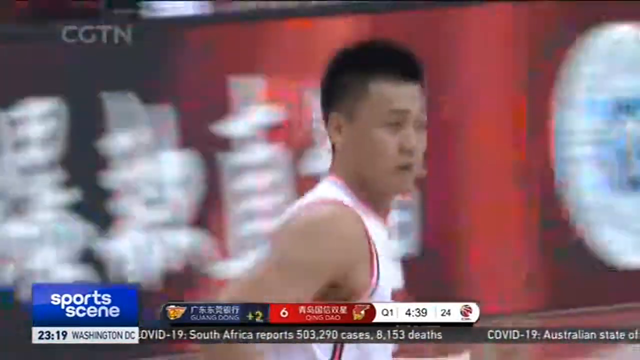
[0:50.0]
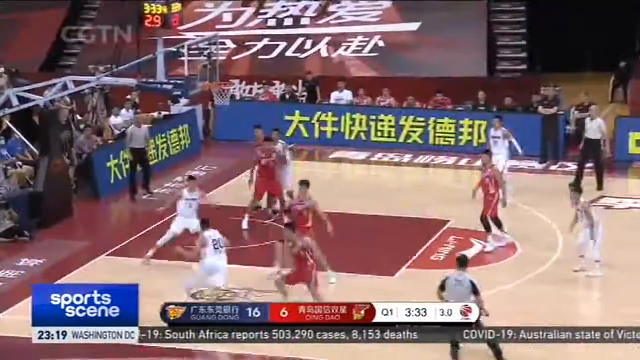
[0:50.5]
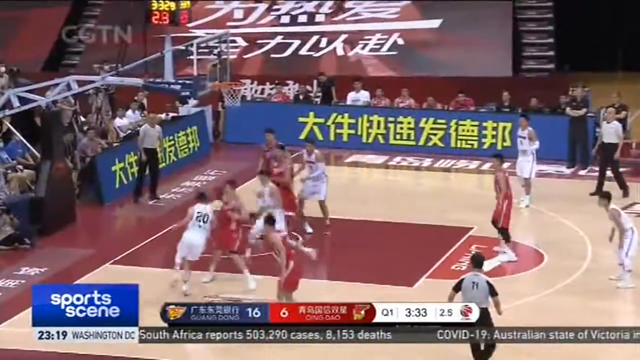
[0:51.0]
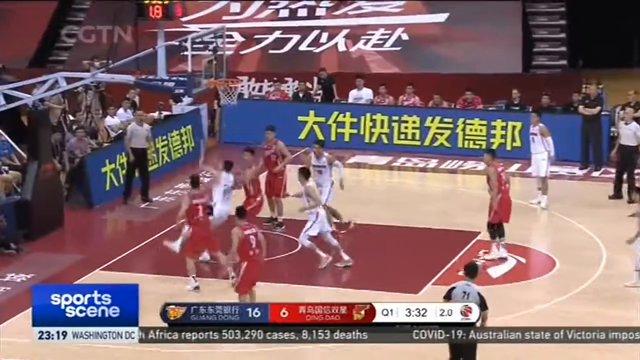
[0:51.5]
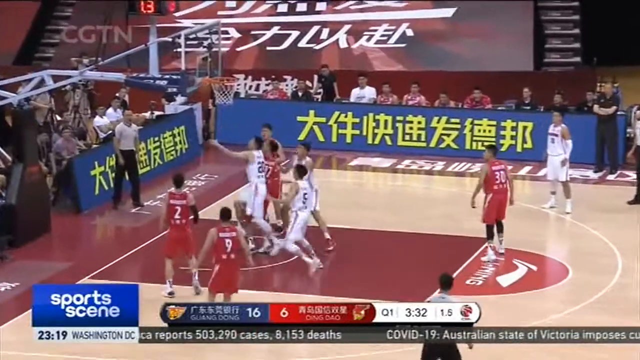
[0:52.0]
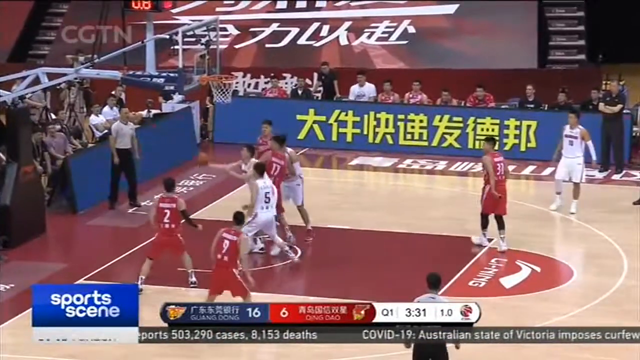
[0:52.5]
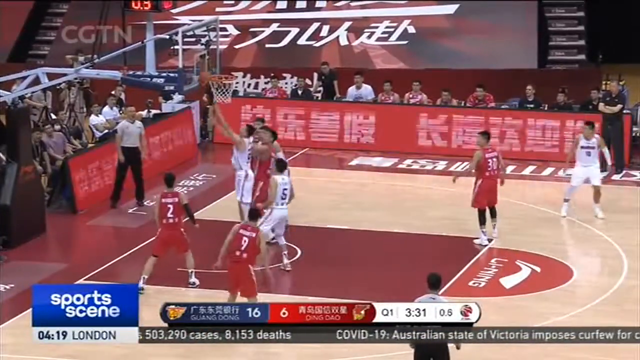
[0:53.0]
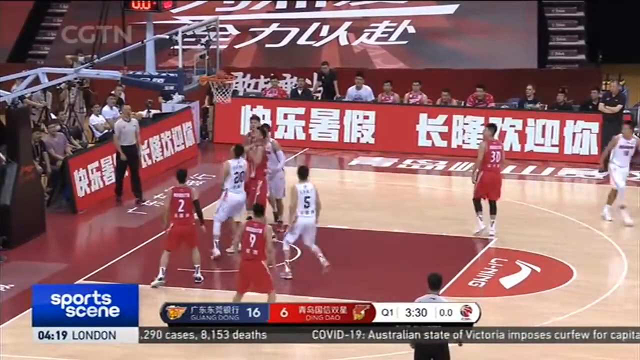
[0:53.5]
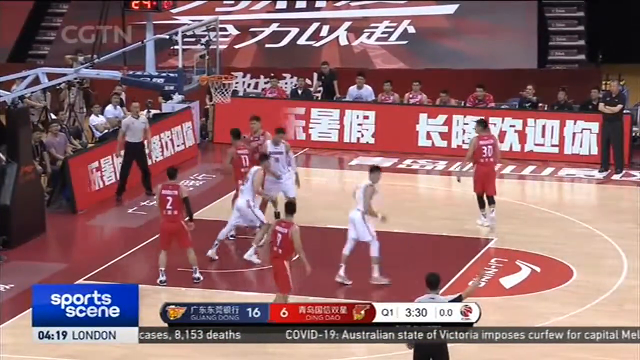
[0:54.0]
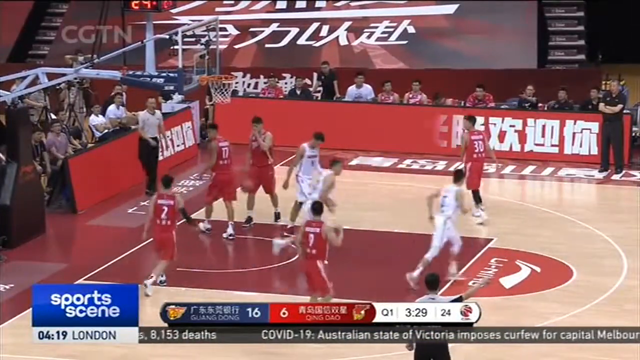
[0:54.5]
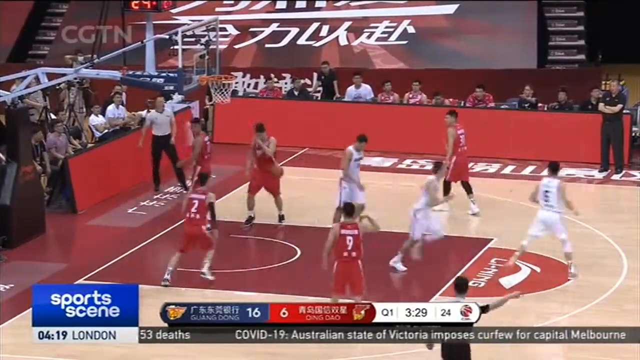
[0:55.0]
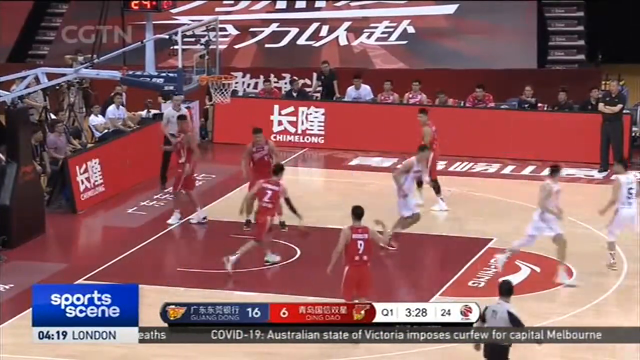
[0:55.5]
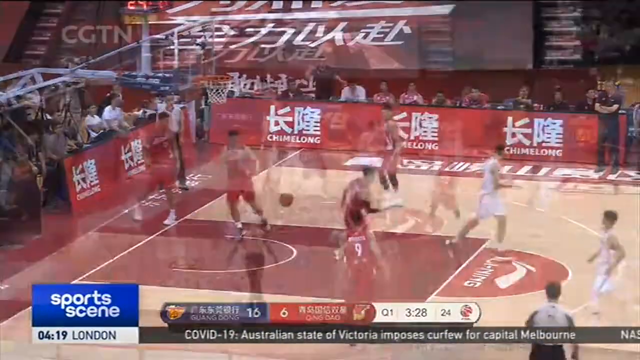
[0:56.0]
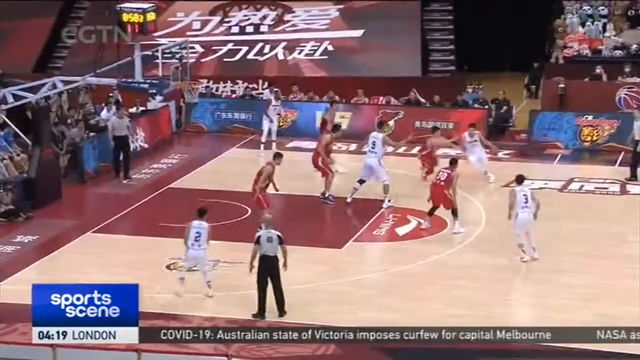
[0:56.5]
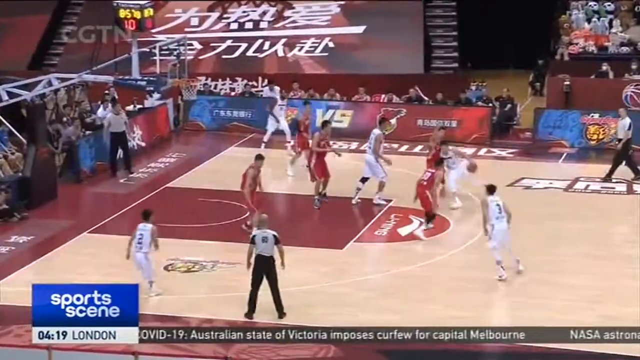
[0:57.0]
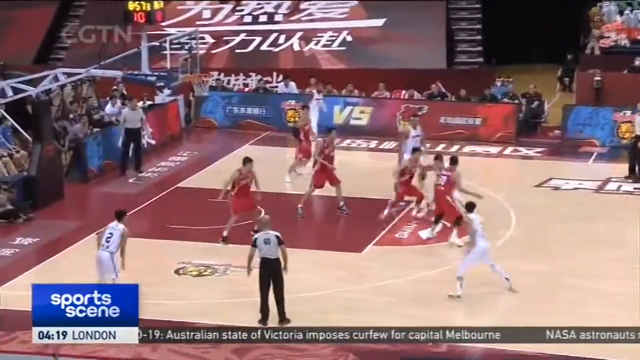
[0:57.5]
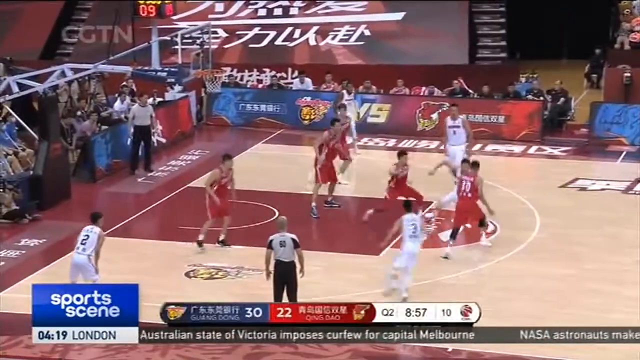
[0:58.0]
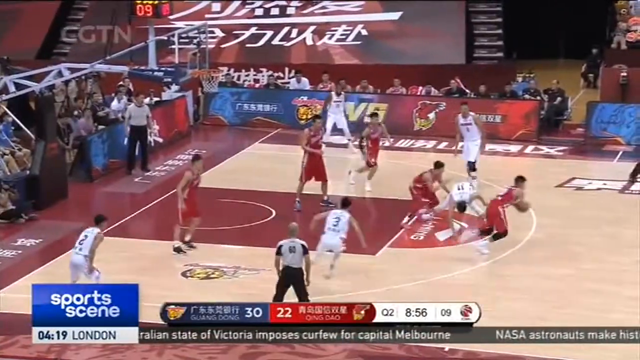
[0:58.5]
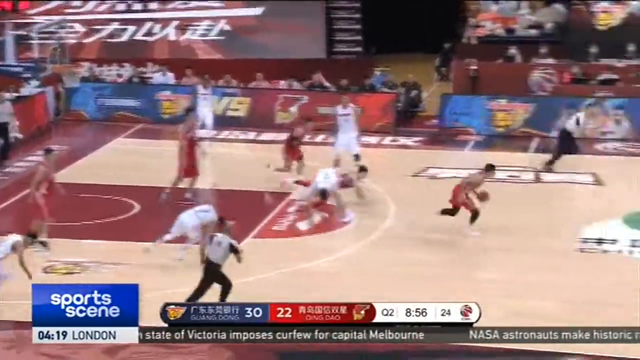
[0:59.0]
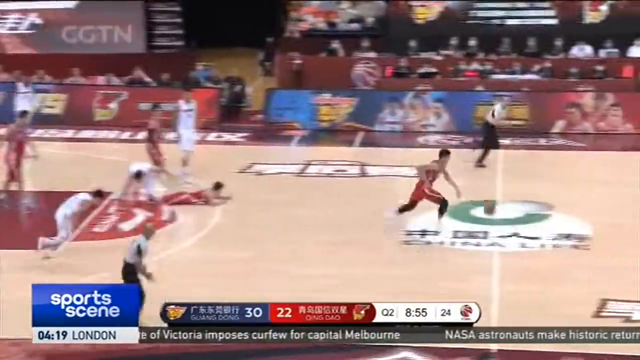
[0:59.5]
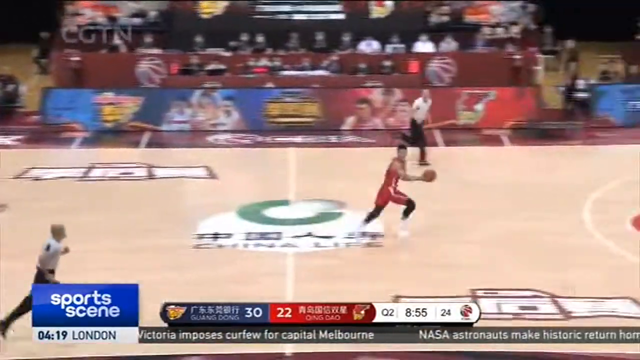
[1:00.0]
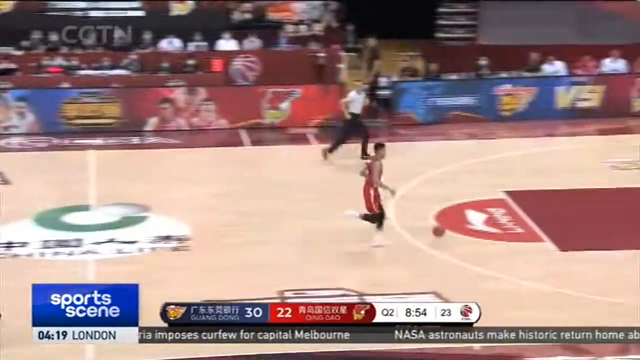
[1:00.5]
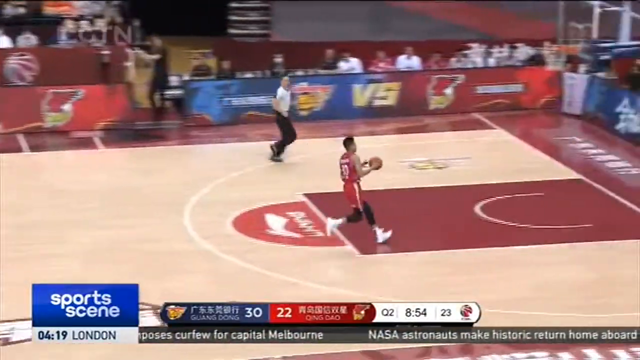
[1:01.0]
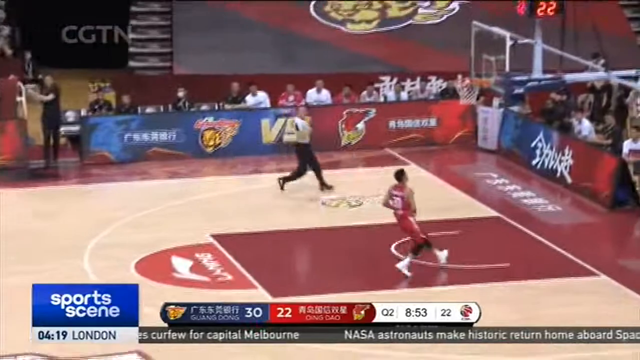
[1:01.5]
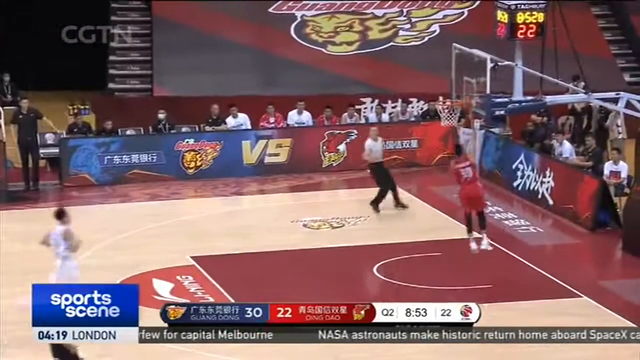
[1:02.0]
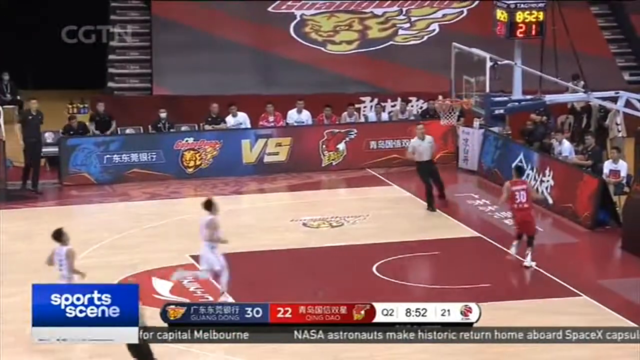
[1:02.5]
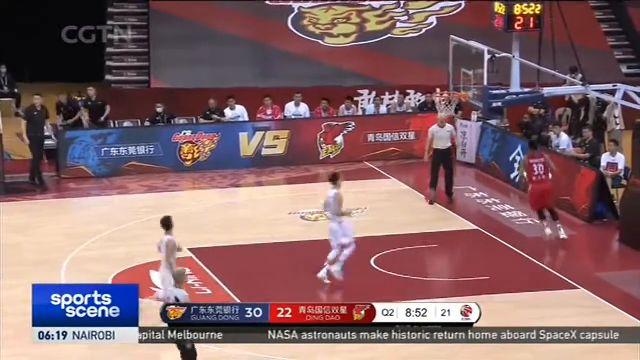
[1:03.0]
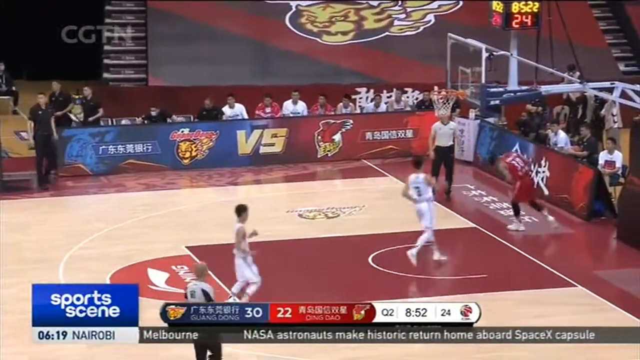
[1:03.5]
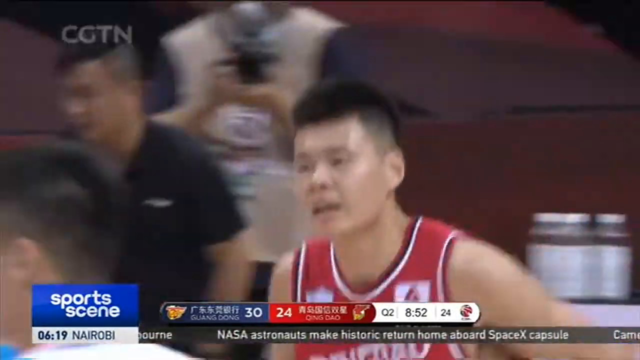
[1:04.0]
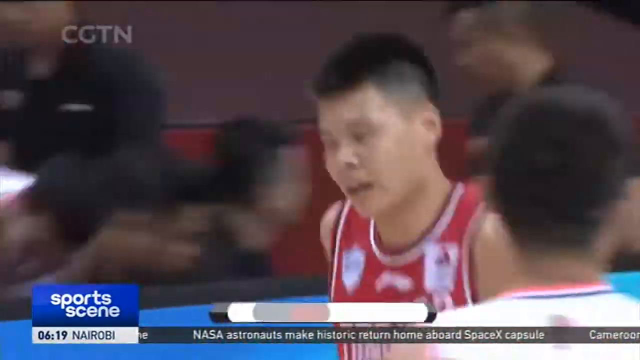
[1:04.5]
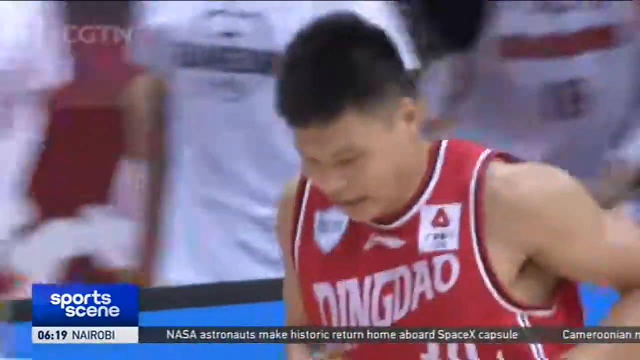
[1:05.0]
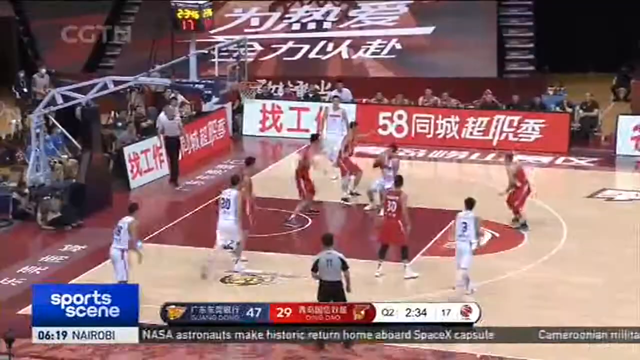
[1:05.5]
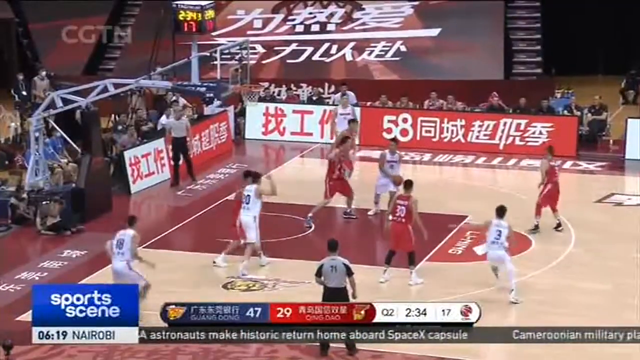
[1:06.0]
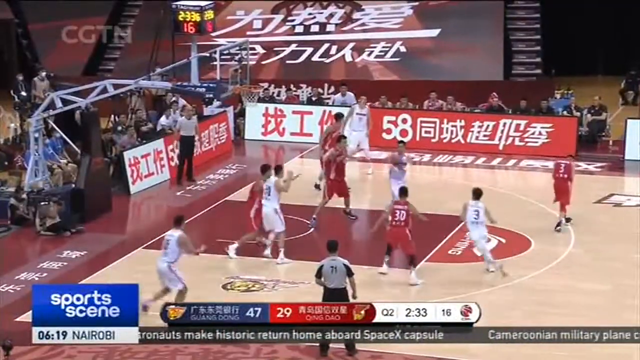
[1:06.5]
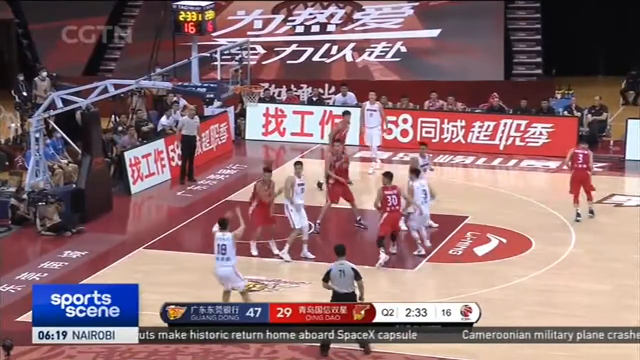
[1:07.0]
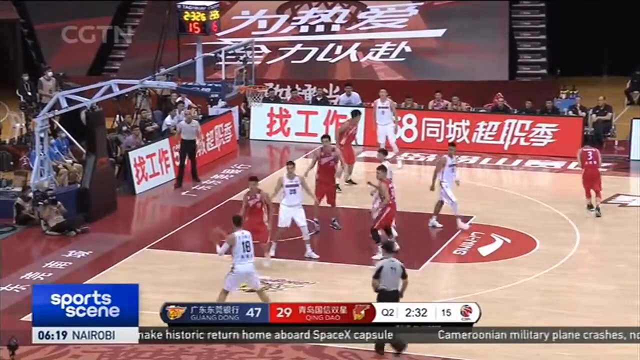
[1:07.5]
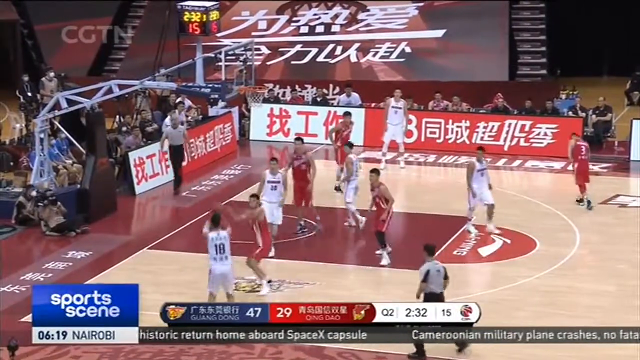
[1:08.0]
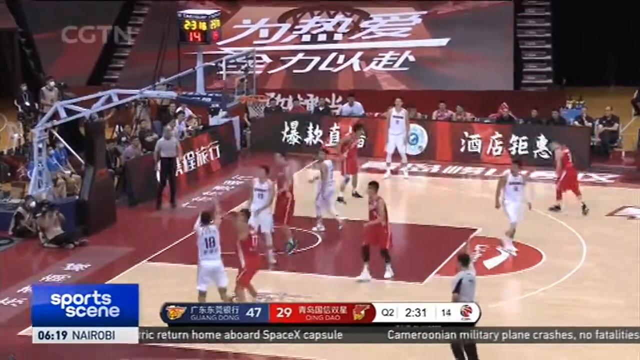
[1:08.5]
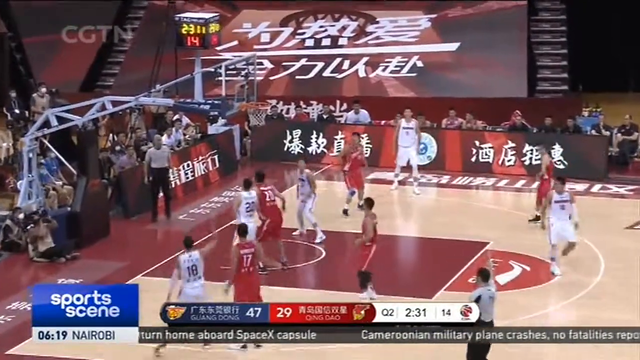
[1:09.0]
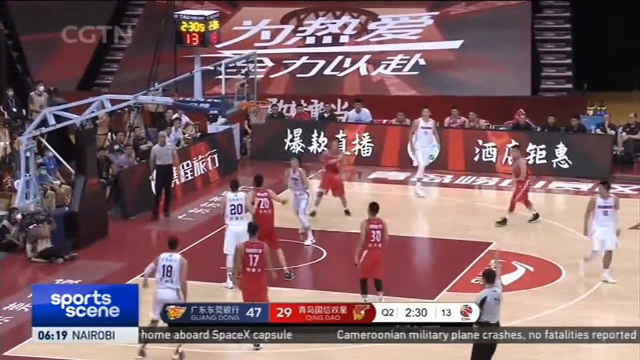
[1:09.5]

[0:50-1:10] An Asian player in a white jersey is shown as the camera pans, then a zoomed-out shot shows the full left side of the court. Number 20 dribbles with his left hand while the player in the red jersey seems to just stand there and let him lean around him. He goes up for a shot and gets hit, apparently fouled, and number 17 is ready to go to the bench. He shoots again and makes it. Digital signs behind the net on the left side and parallel to the court read "chisel chisel long", possibly with Asian writing above. The blue team leads 30-22, but the ball is stolen by the red team, and the player goes all the way back for an uncontested layup while the white team comes back to defend too late. Number 18 gets a pass near the three-point line and drains the shot.